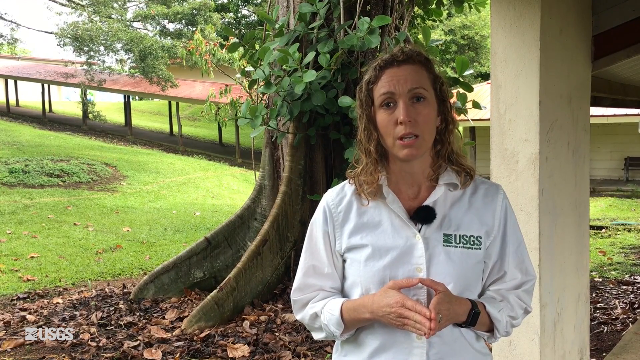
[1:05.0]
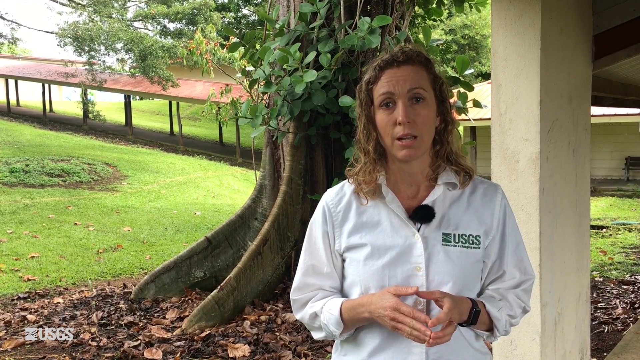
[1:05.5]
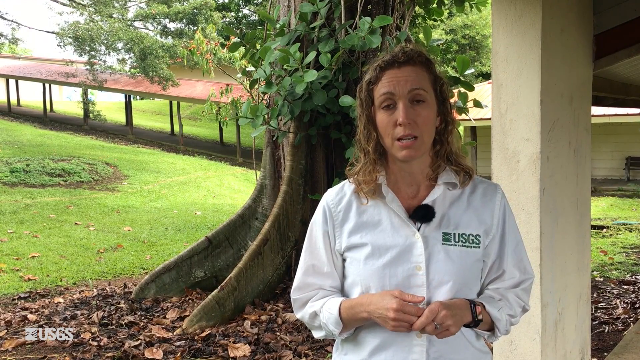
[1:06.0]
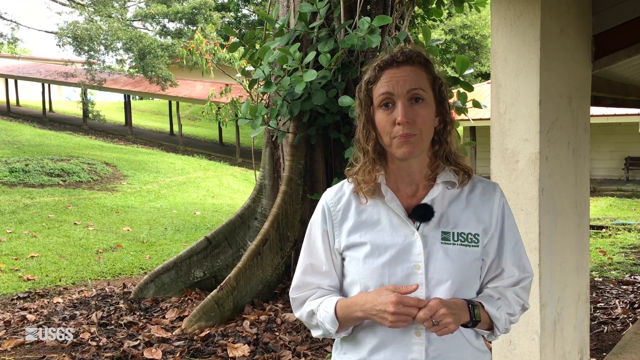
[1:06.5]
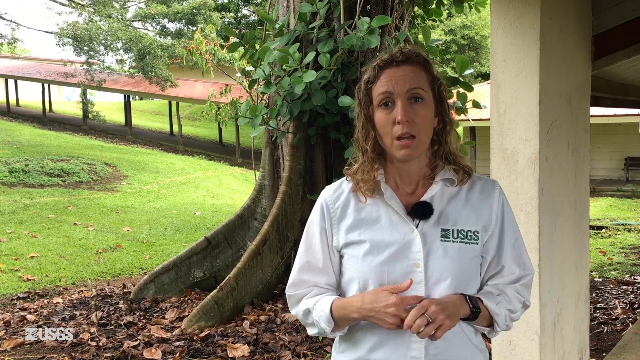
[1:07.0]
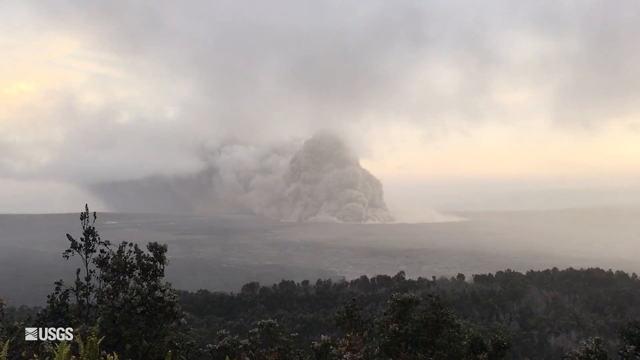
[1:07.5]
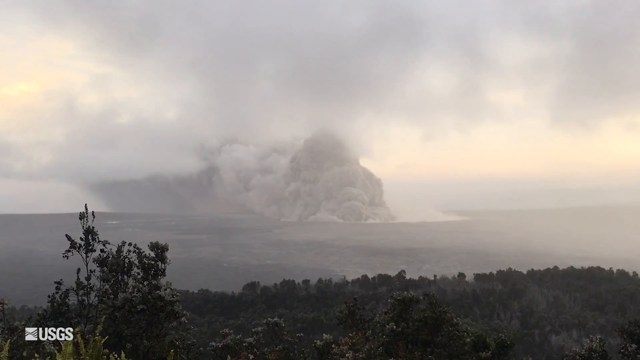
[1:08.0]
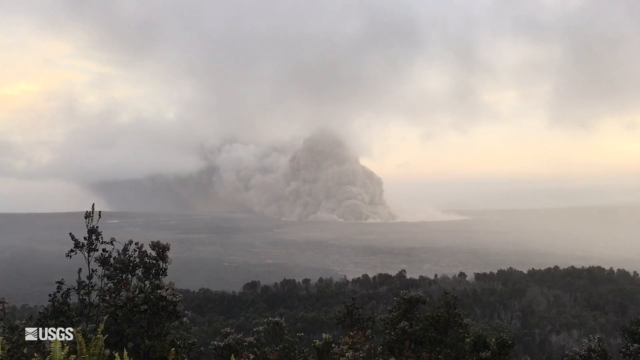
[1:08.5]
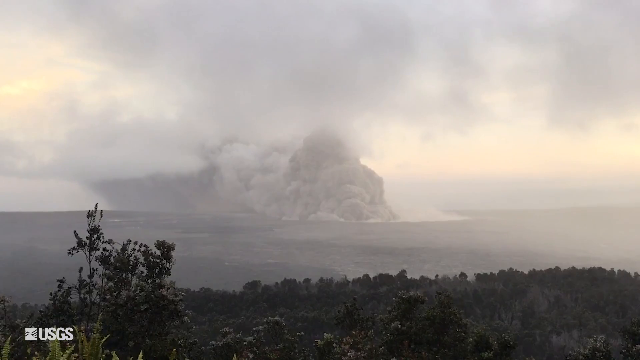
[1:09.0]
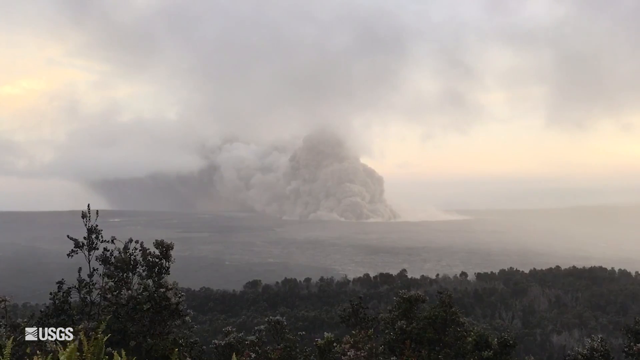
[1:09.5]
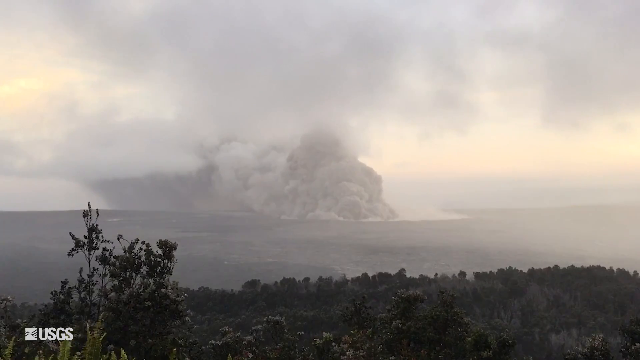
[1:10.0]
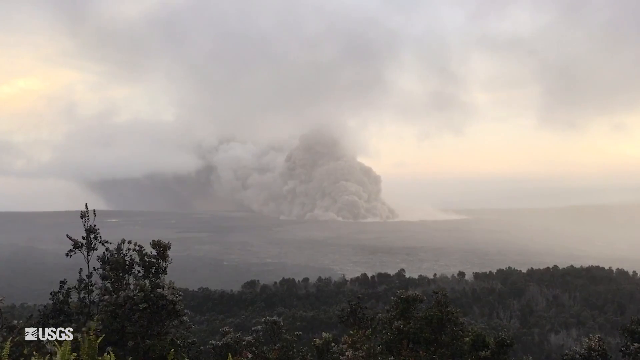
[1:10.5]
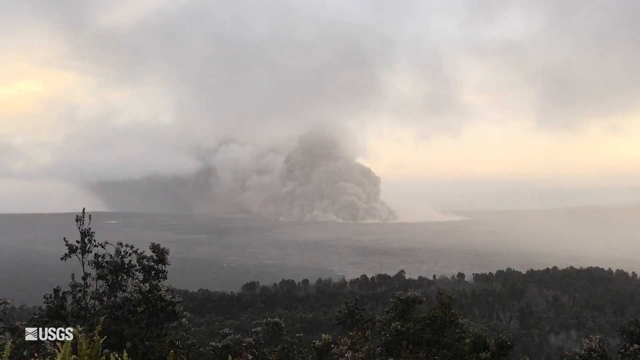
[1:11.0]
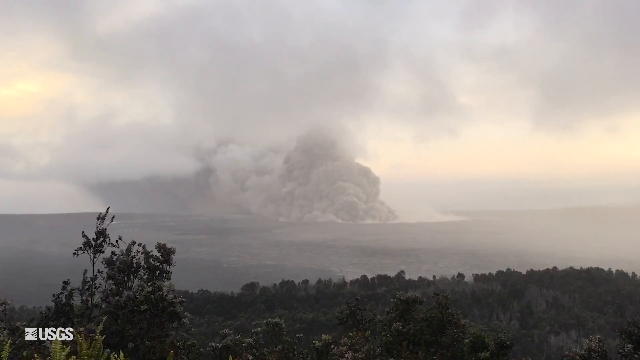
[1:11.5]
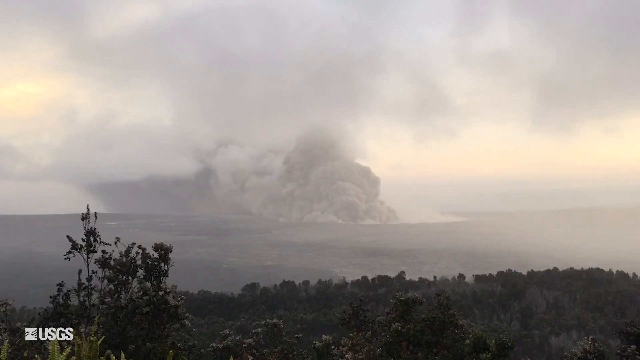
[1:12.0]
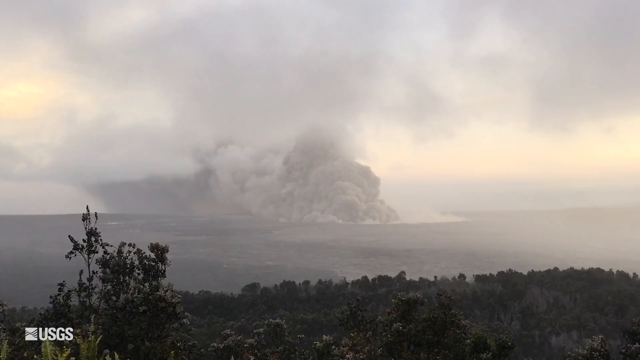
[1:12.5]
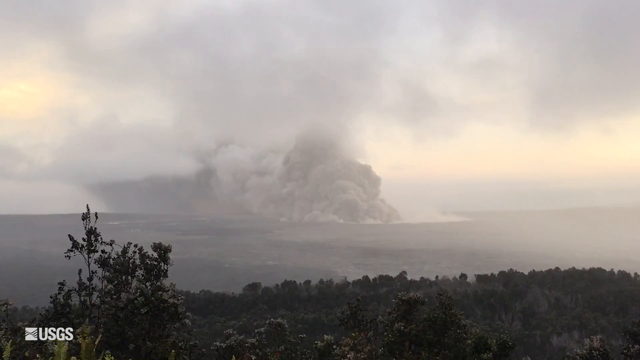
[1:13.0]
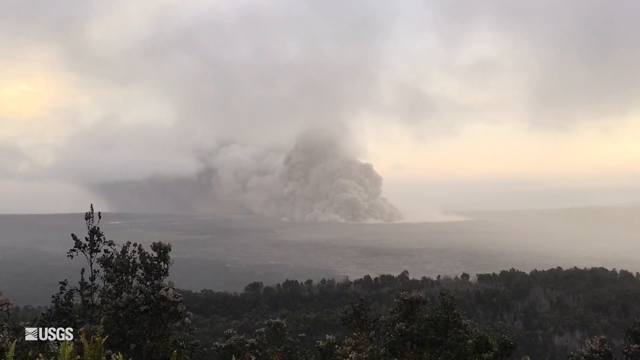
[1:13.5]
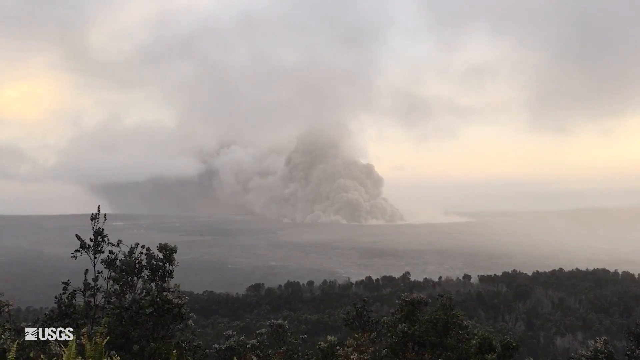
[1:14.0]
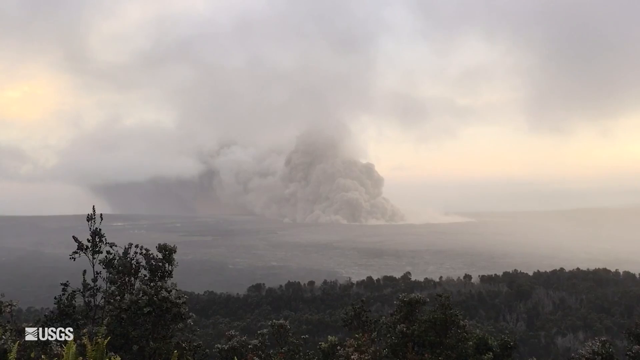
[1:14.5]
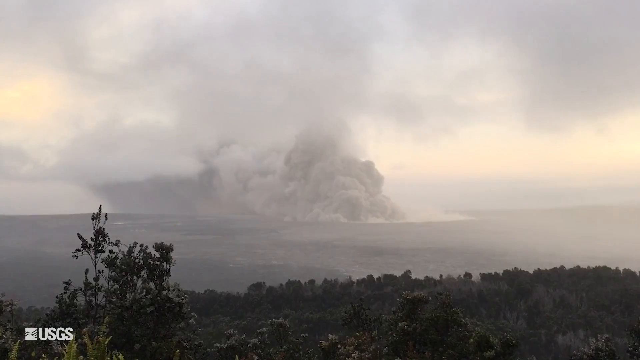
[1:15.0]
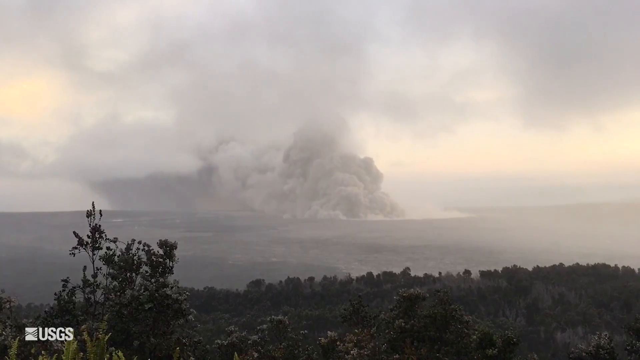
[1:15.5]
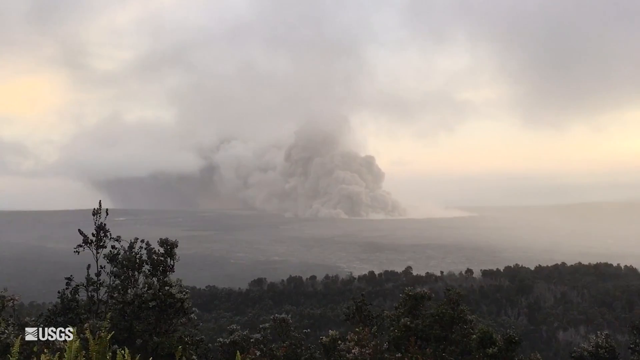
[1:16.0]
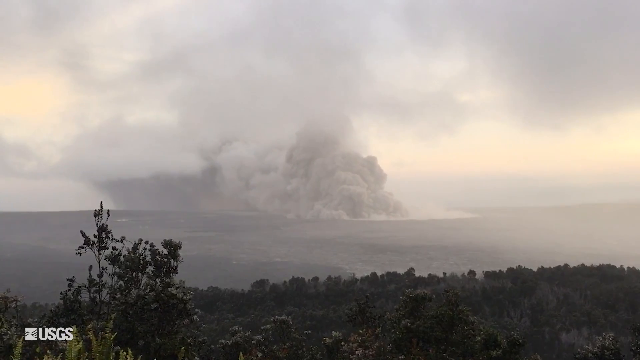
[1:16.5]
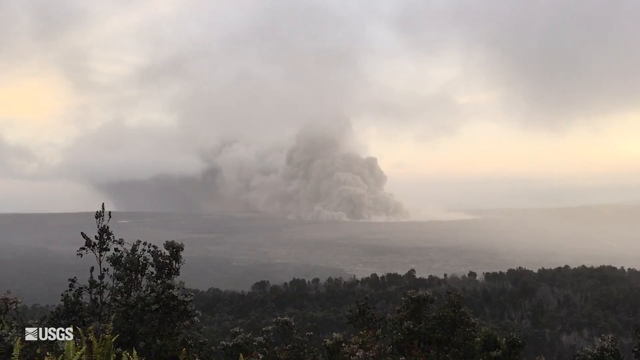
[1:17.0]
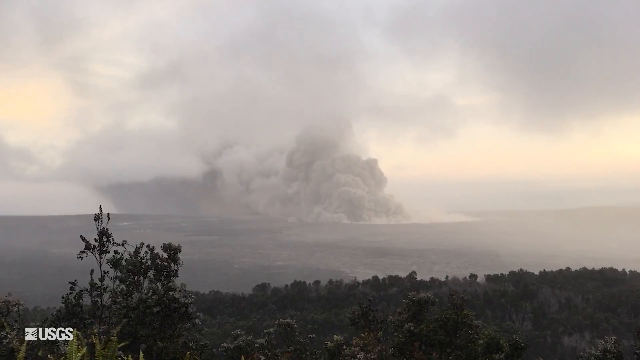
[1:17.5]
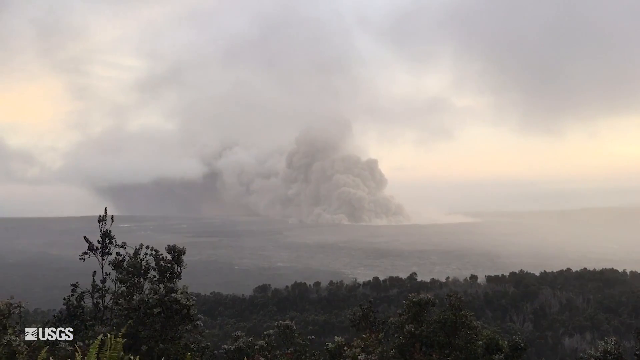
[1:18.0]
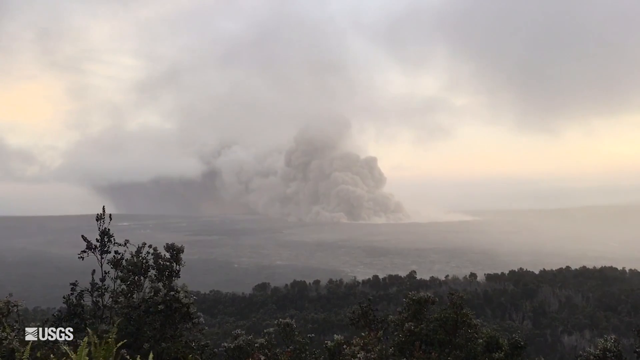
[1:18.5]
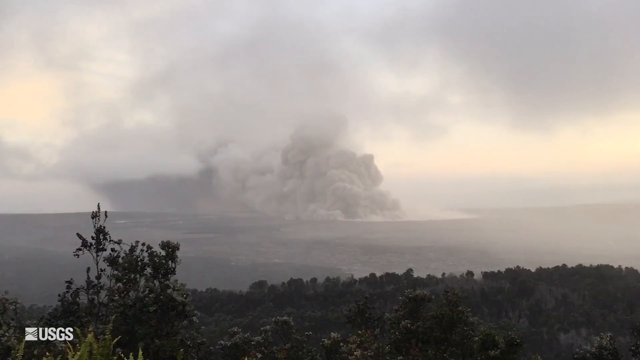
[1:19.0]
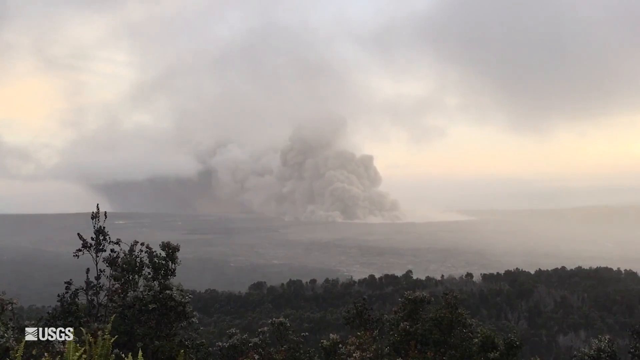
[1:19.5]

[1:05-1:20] The geologist speaks, and then the video pans out to footage of Kilauea from a bit farther away, showing the smoke and ash, which make the sky look gray over the island. Brush and plants are in the front of the shot. It seems like it would be a sunny day, but the ash, smoke and steam from the eruption make it look almost like a rainy day, though it is not raining. Some of the steam and smoke possibly goes into the water. The USGS watermark is in the left-hand corner.